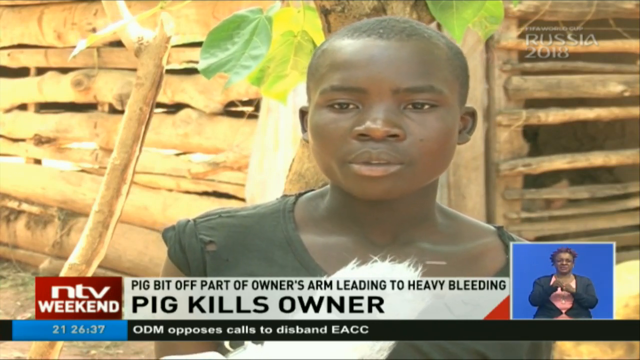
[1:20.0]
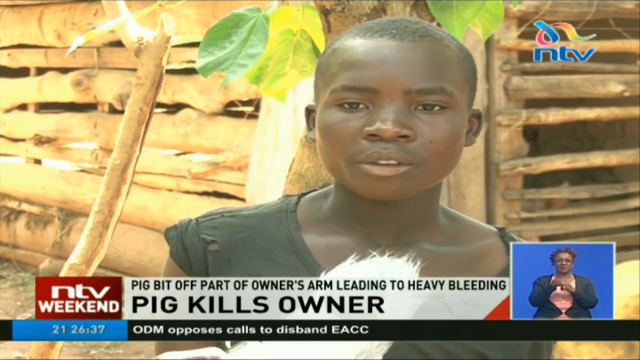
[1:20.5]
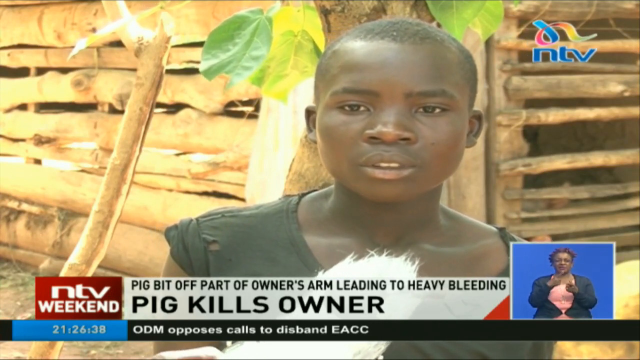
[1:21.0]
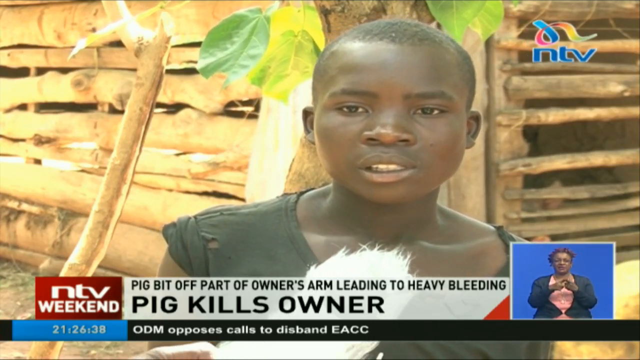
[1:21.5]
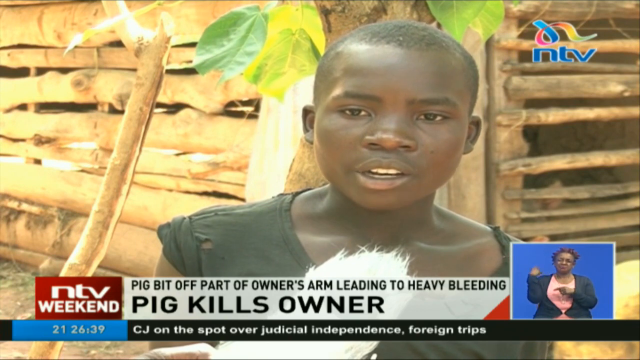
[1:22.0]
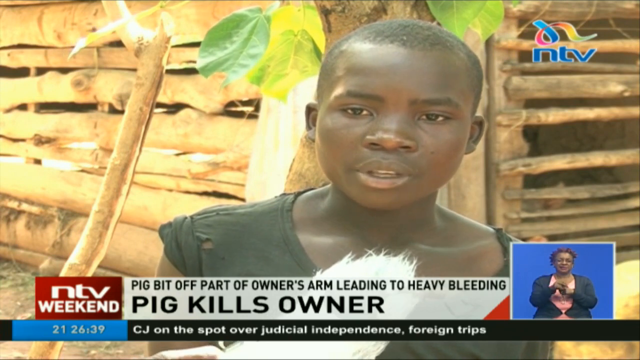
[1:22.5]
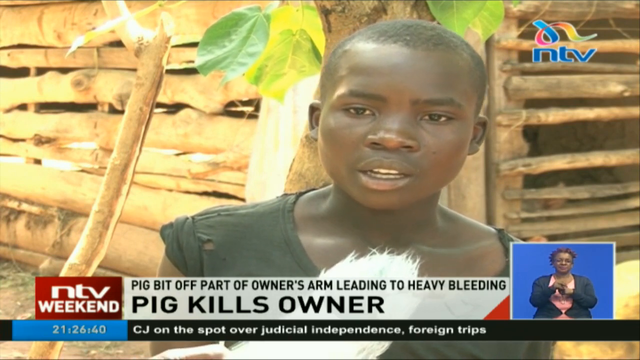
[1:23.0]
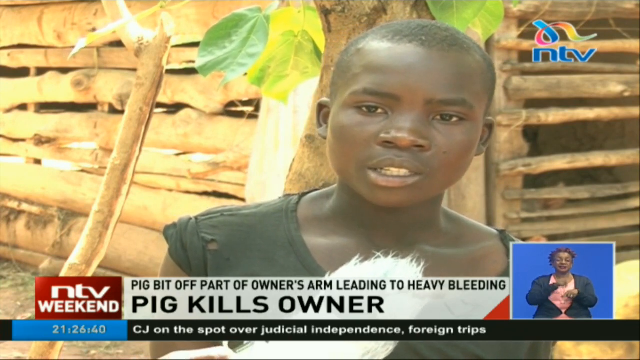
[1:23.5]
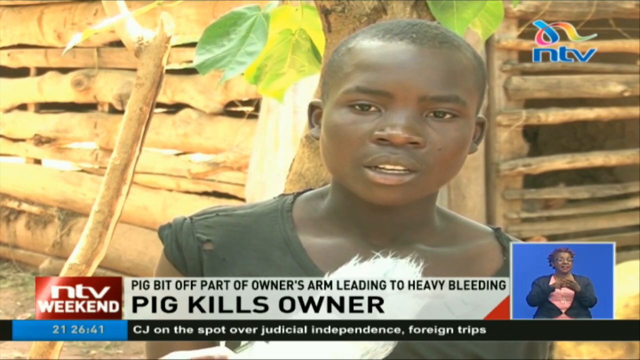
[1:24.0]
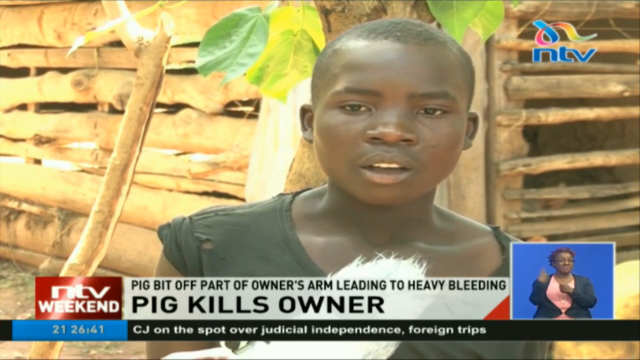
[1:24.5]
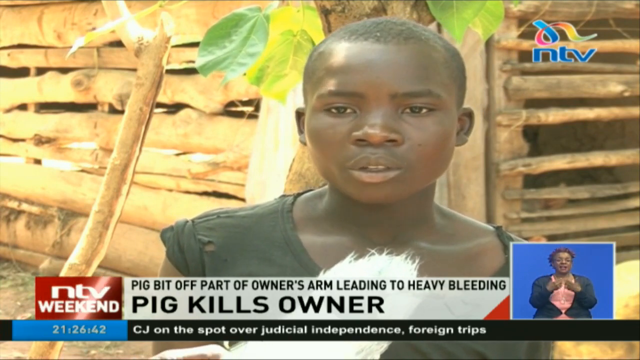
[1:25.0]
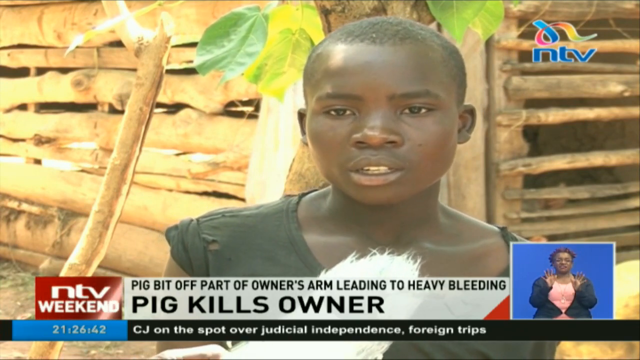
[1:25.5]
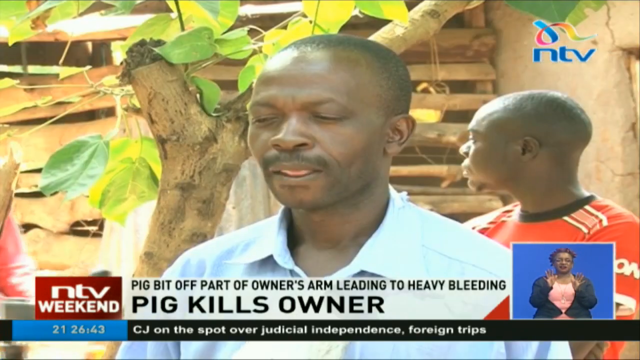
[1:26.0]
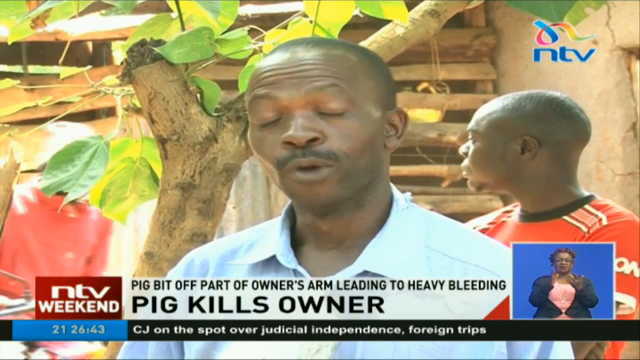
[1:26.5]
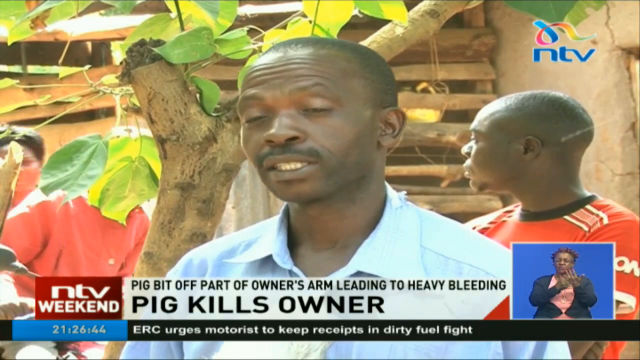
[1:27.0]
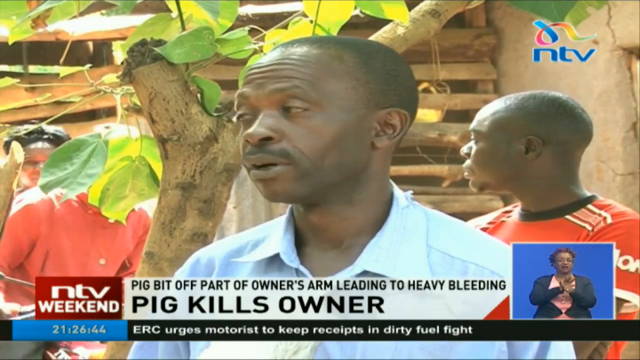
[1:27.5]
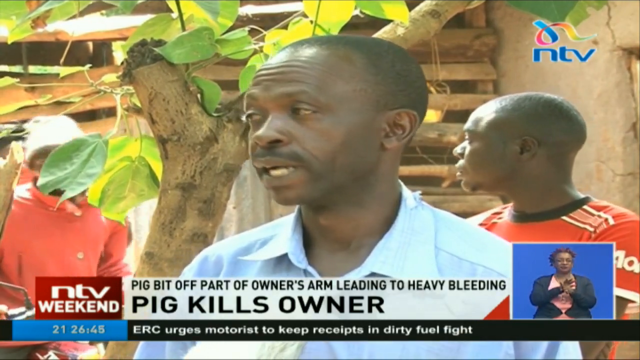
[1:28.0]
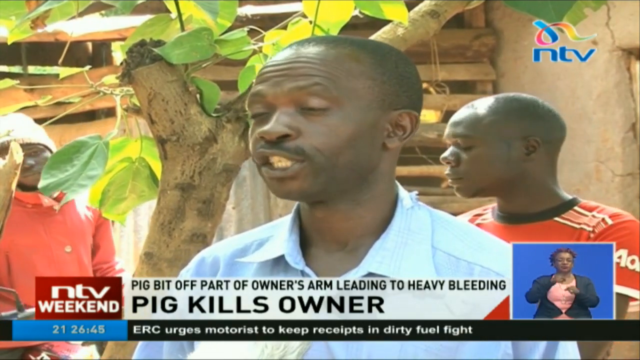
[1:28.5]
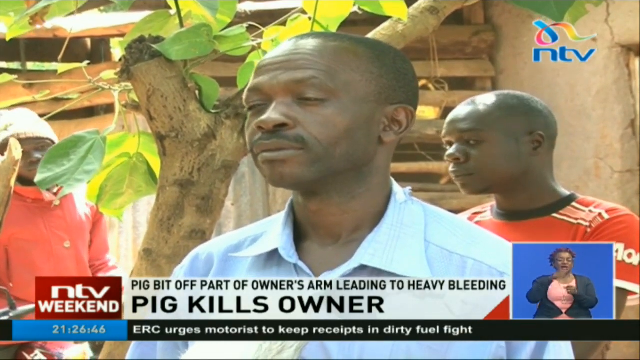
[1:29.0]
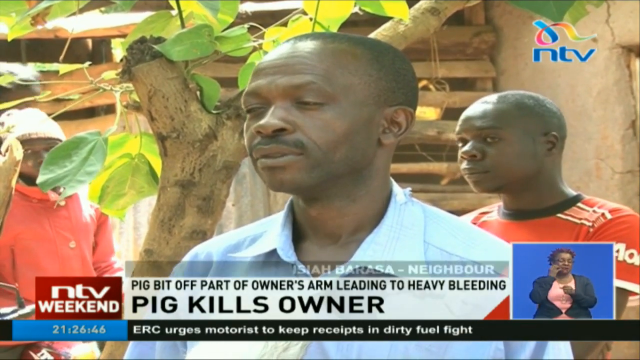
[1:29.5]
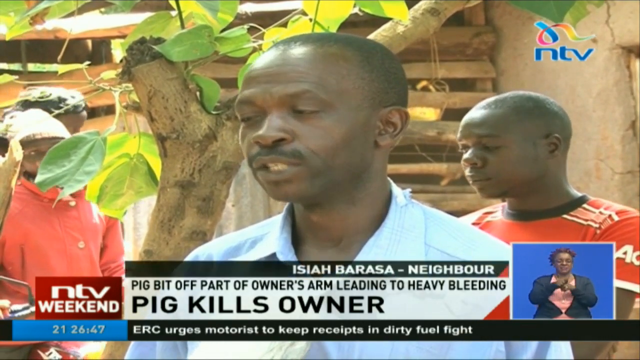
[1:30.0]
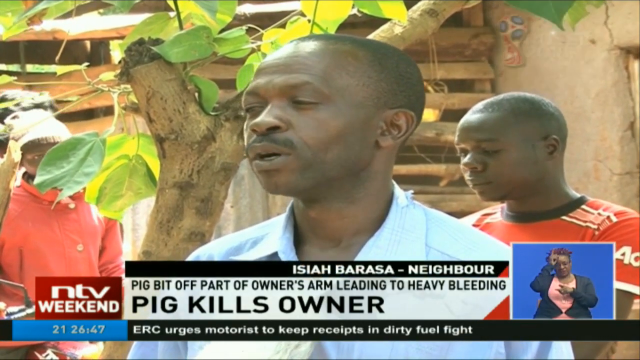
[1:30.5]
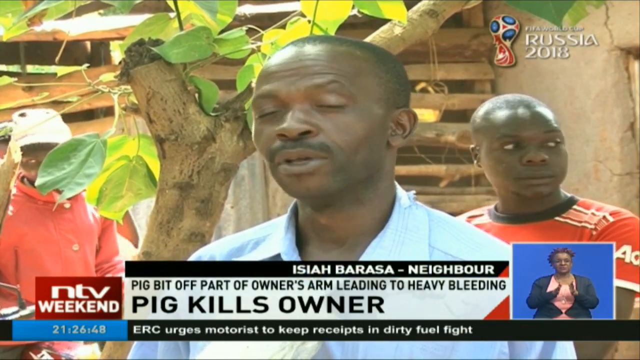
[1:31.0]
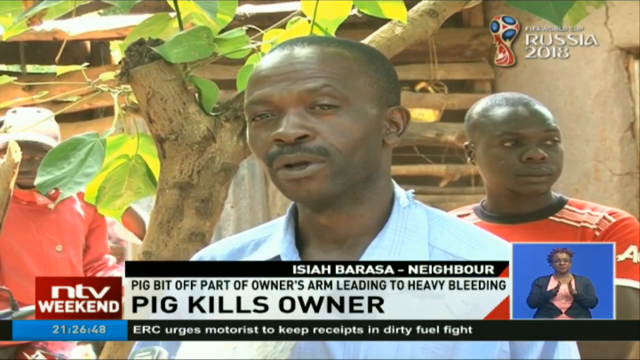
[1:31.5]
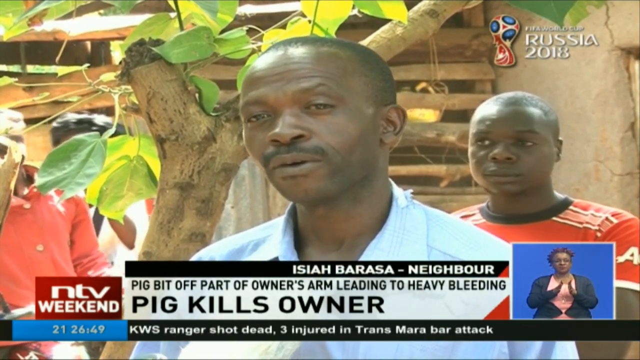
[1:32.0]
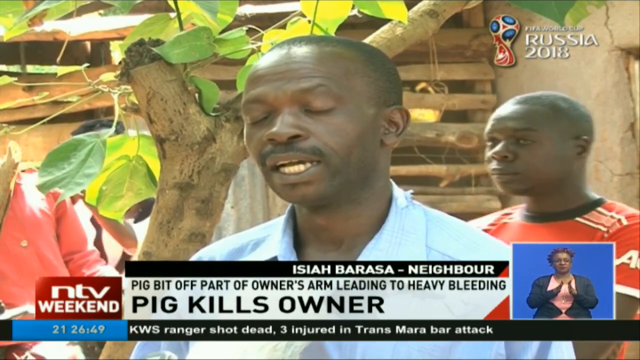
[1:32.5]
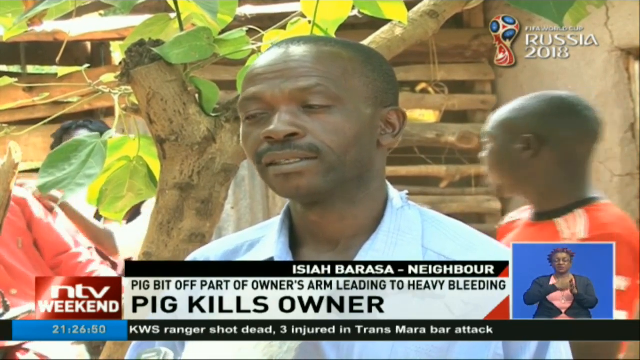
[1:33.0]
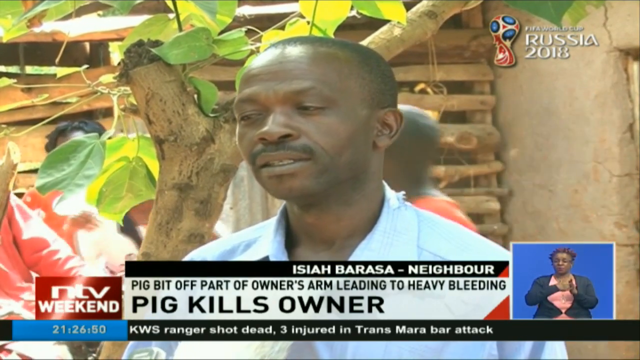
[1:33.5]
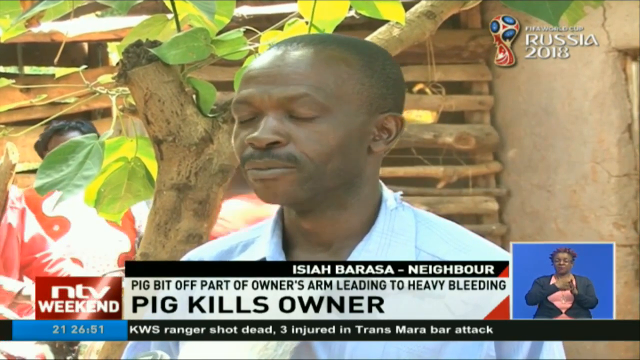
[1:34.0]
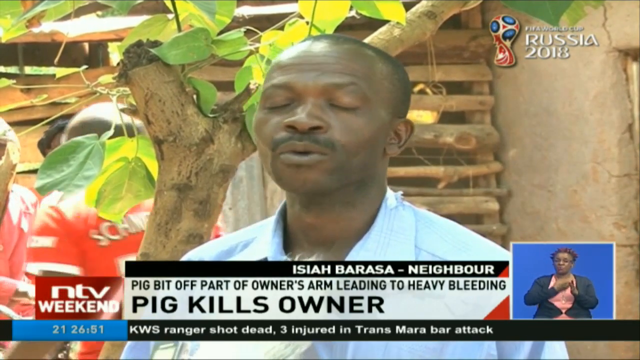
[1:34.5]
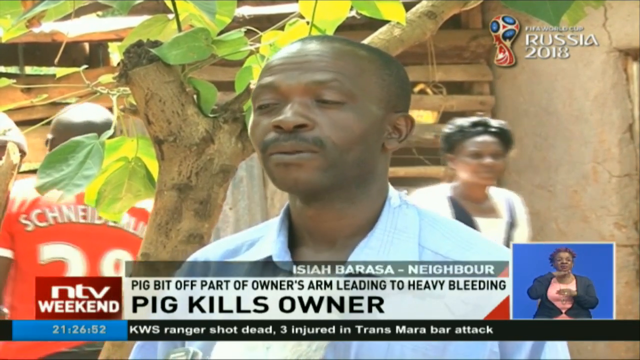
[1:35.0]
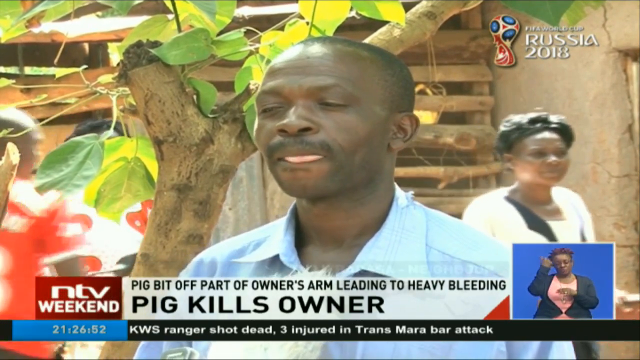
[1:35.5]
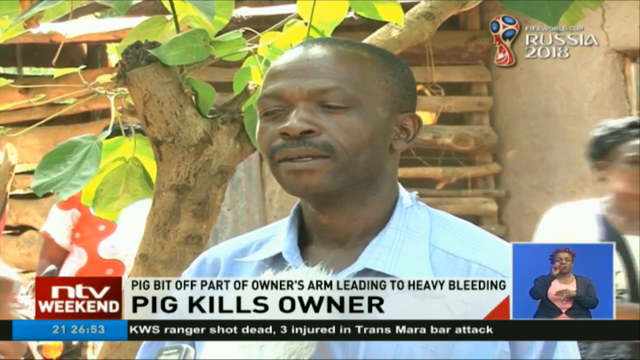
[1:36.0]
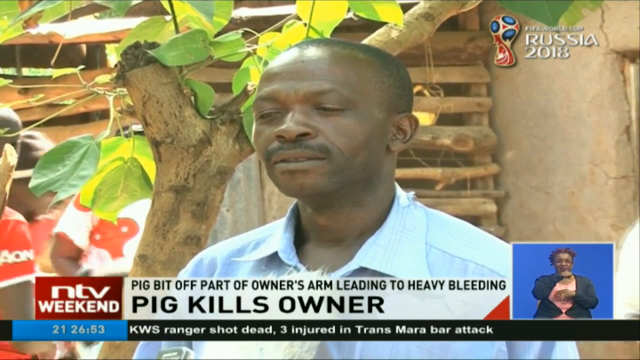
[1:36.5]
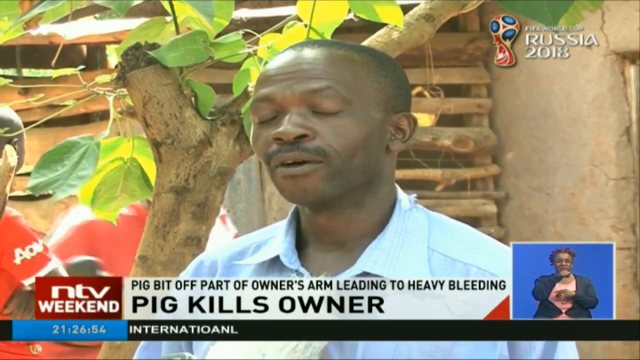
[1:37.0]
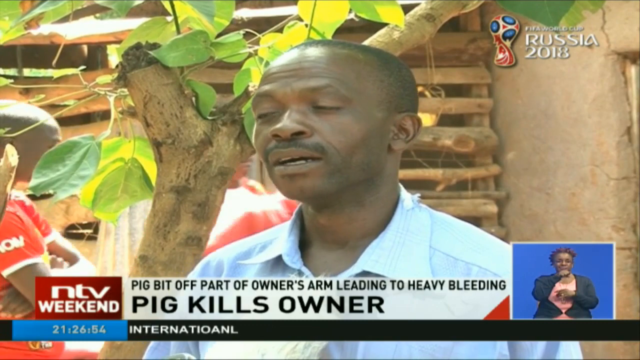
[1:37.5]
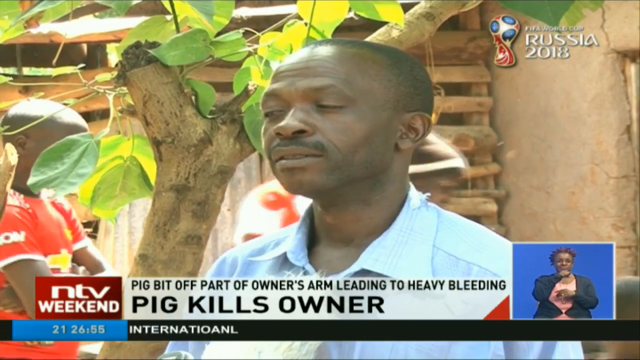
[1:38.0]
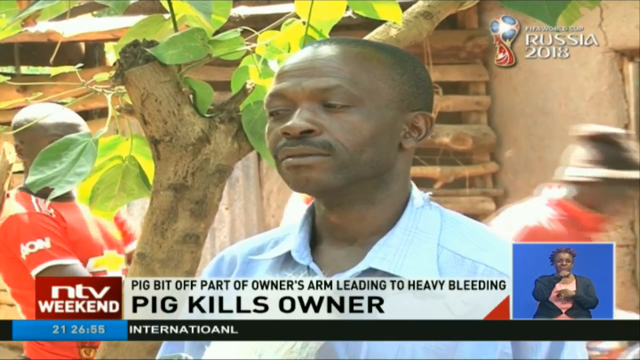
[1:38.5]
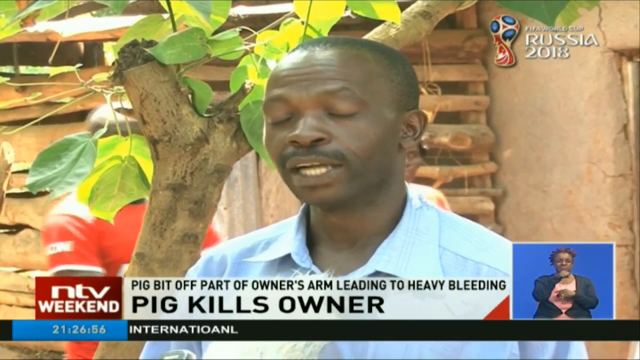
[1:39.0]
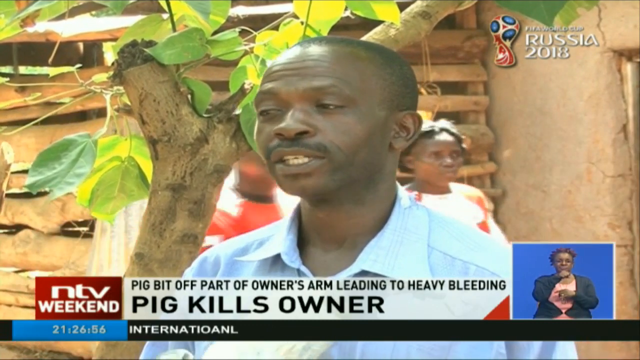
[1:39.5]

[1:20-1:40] A boy is being interviewed, wearing a torn black short-sleeve t-shirt; he seems to be 11 to 14 years of age. His name is Kelvin Werunga, the son of the deceased Mr. Werunga, and he is talking to the journalists. Another person is then interviewed: Isaiah Barasa, the neighbour of the deceased Mr. Werunga. He wears a blue shirt that is turned a little at the collar and seems to be 50 to 60 years of age. In the background where he is standing there seem to be other people, one of them wearing a red T-shirt, and there seem to be boys as well, possibly teenagers.